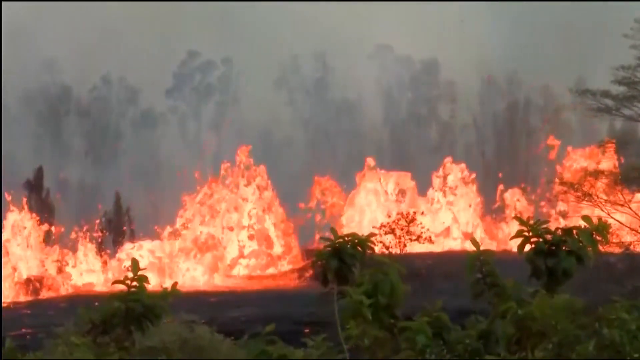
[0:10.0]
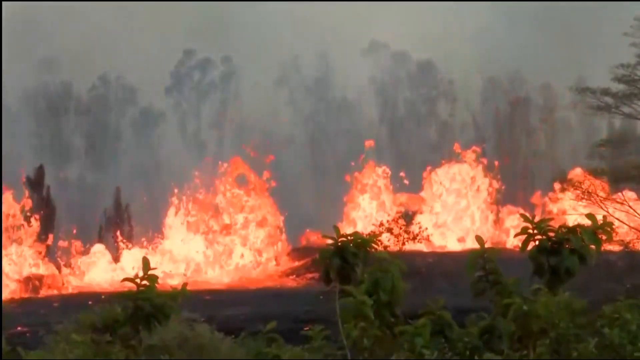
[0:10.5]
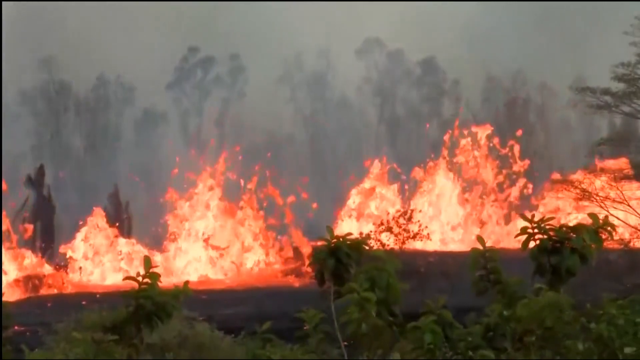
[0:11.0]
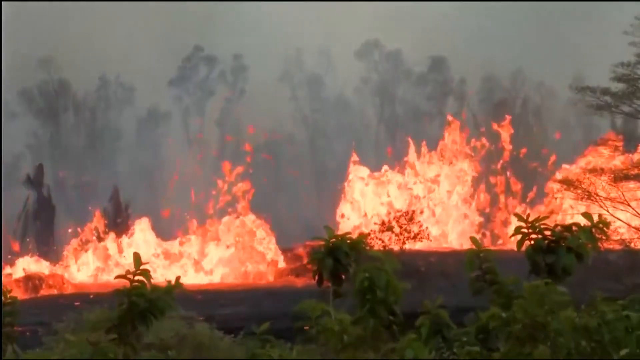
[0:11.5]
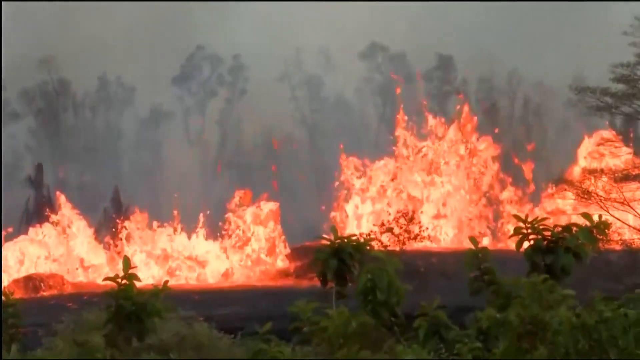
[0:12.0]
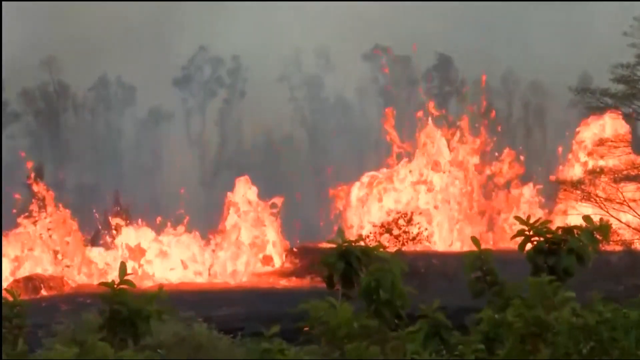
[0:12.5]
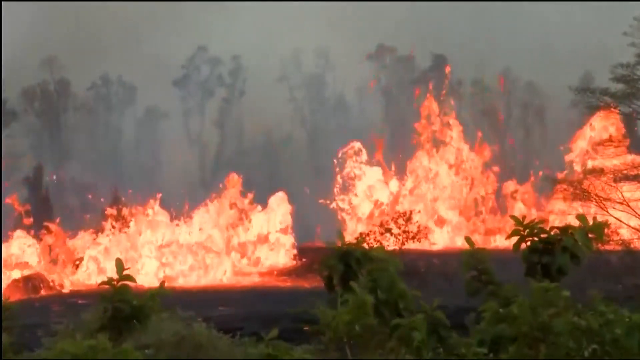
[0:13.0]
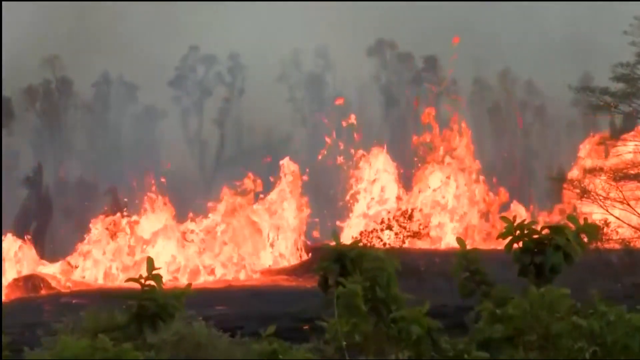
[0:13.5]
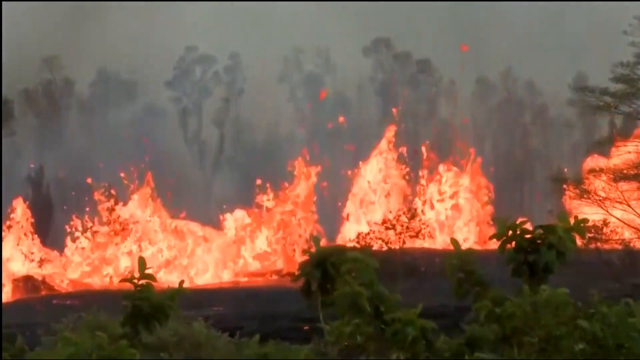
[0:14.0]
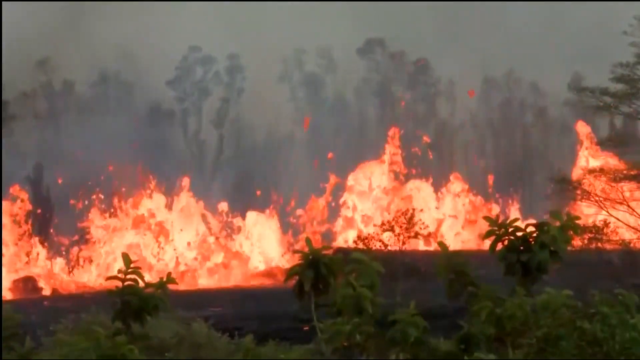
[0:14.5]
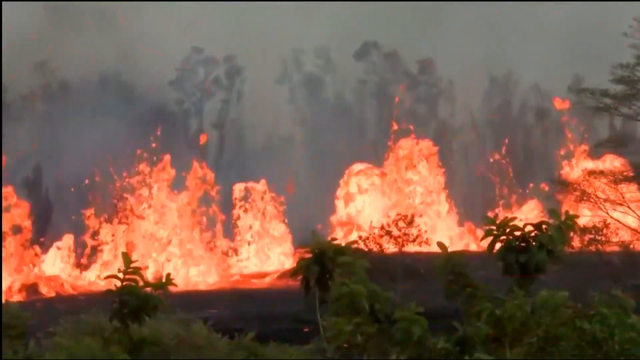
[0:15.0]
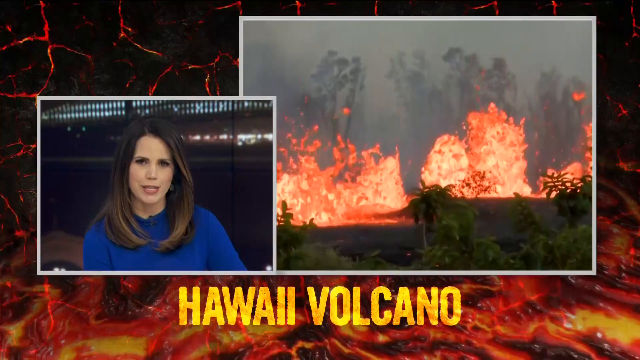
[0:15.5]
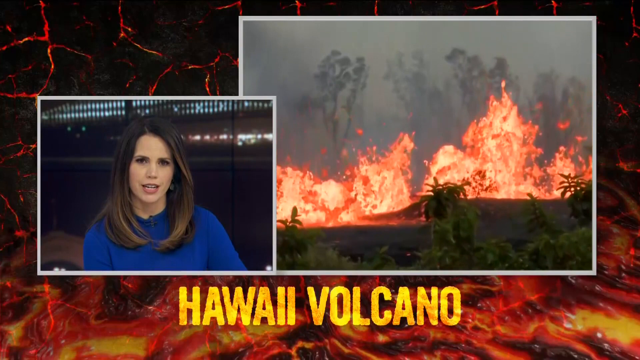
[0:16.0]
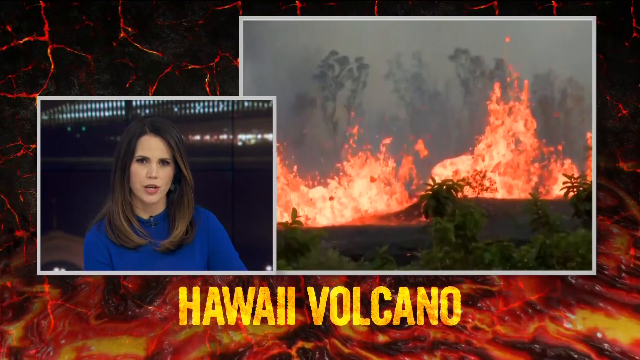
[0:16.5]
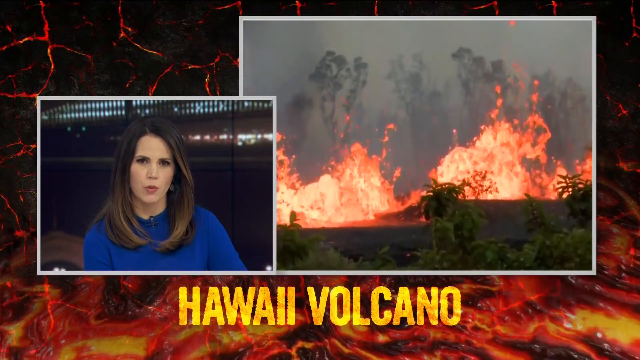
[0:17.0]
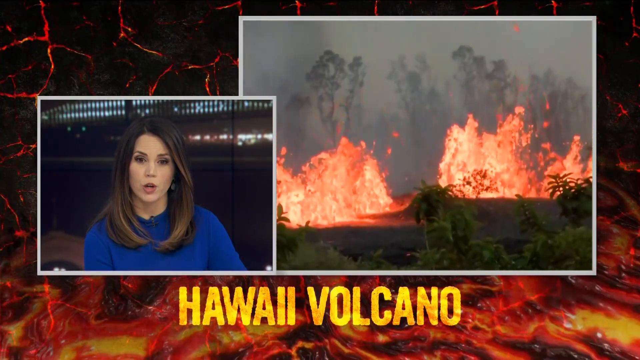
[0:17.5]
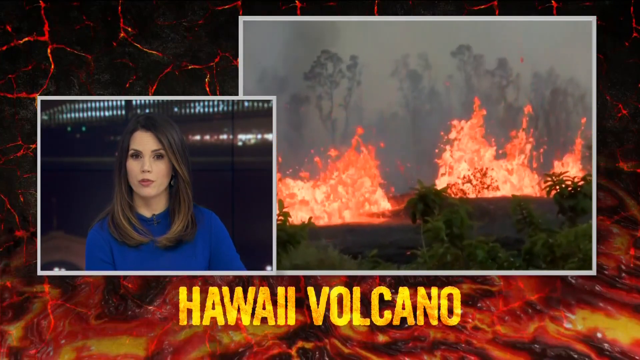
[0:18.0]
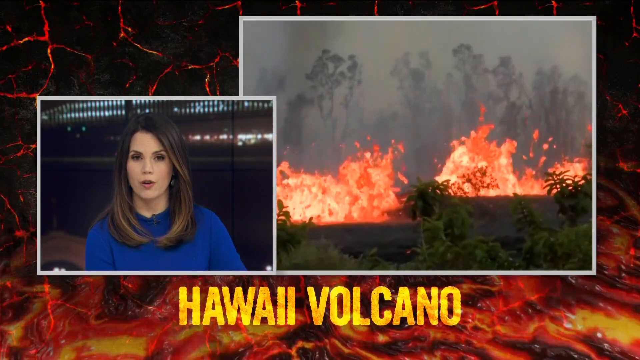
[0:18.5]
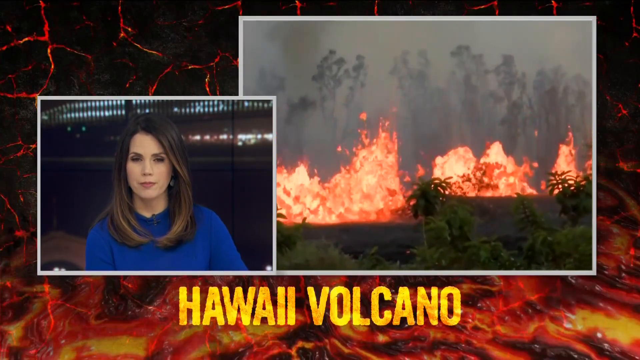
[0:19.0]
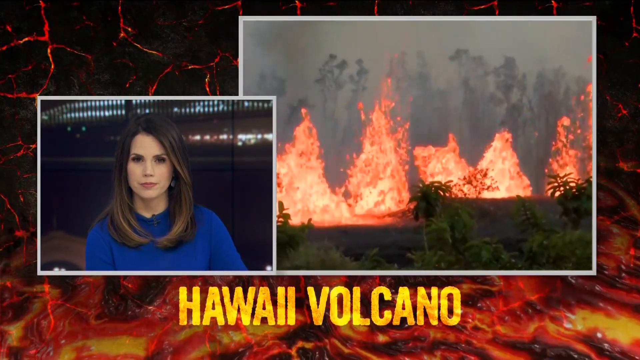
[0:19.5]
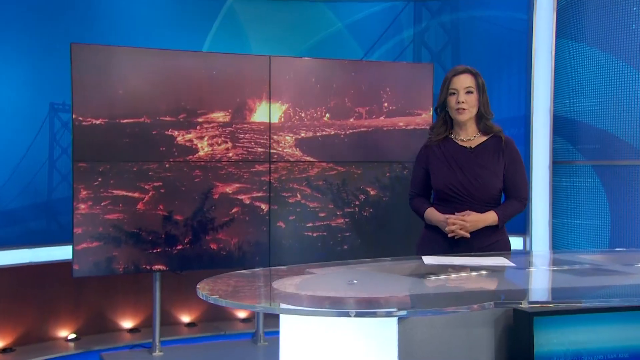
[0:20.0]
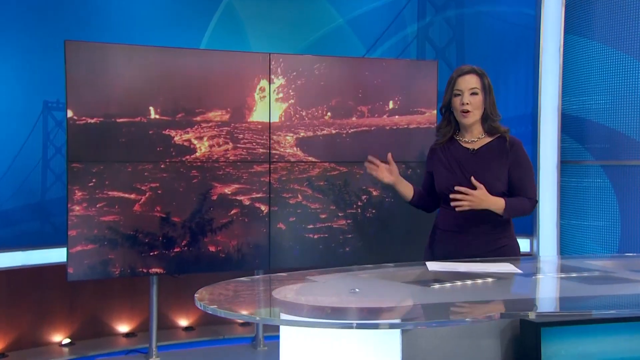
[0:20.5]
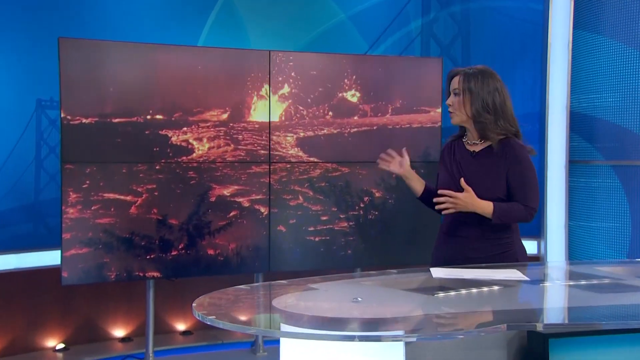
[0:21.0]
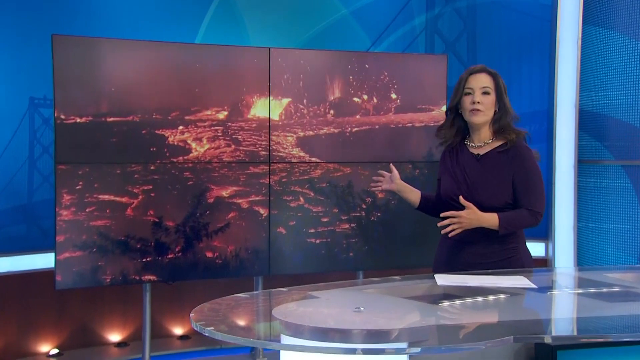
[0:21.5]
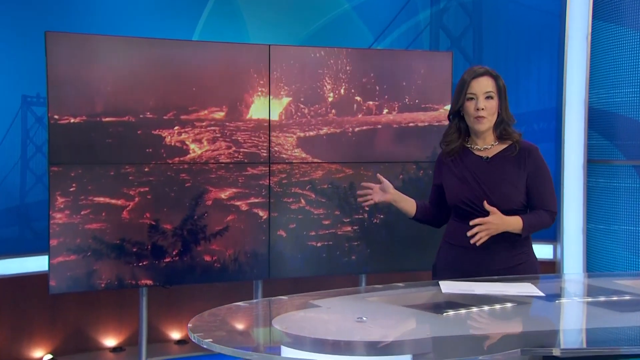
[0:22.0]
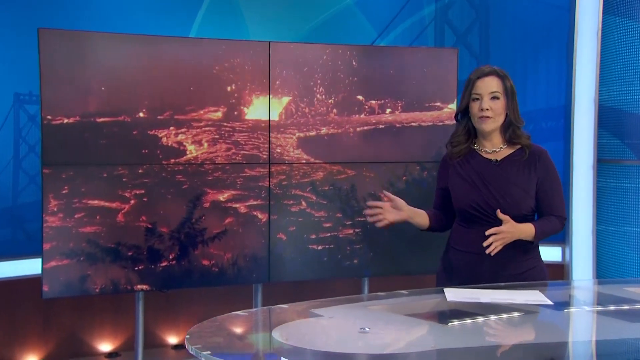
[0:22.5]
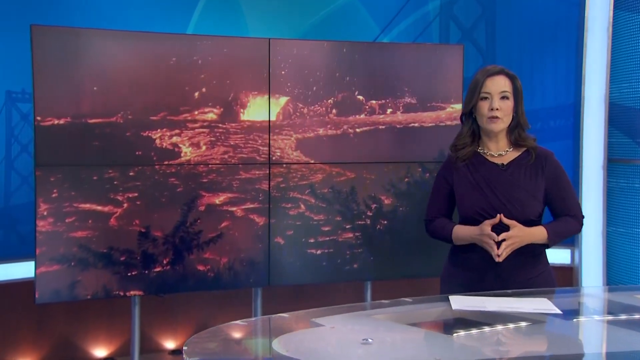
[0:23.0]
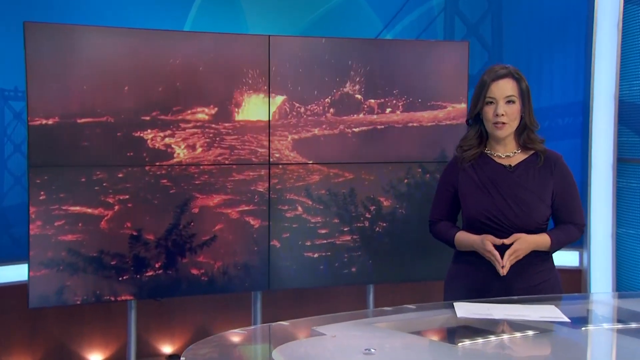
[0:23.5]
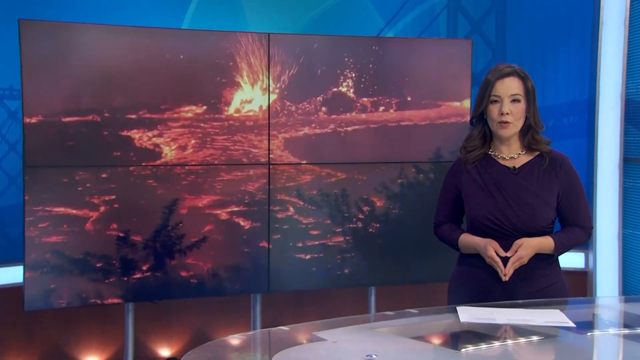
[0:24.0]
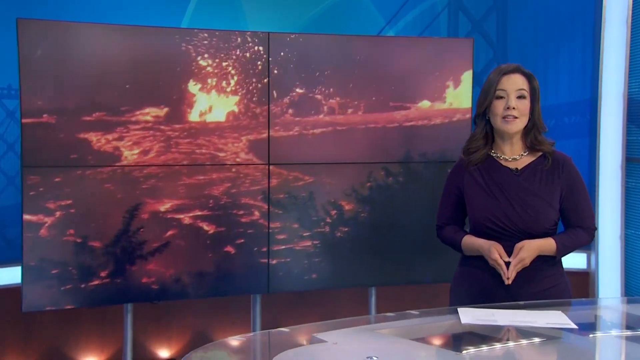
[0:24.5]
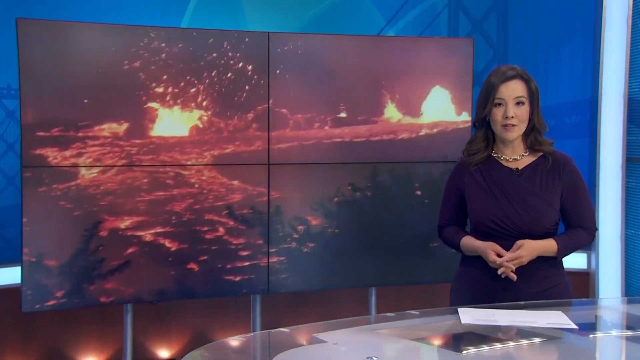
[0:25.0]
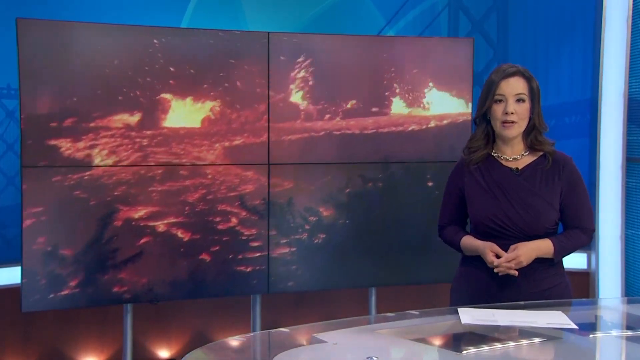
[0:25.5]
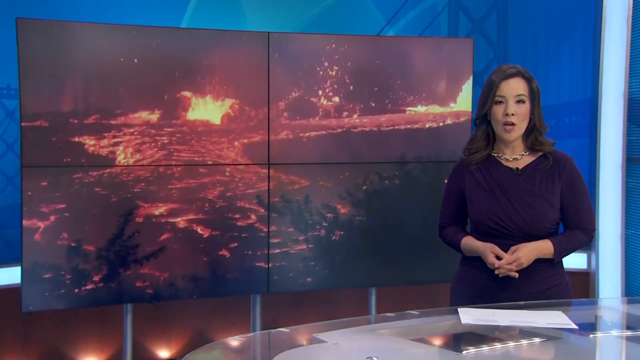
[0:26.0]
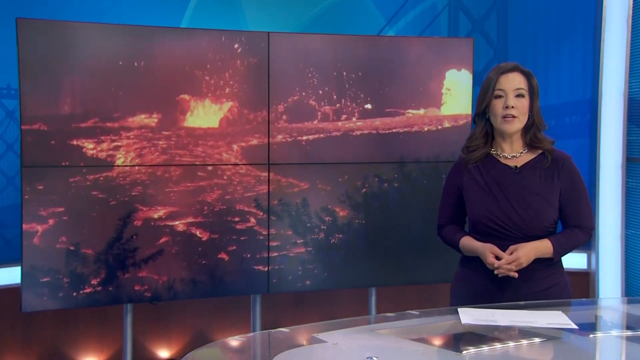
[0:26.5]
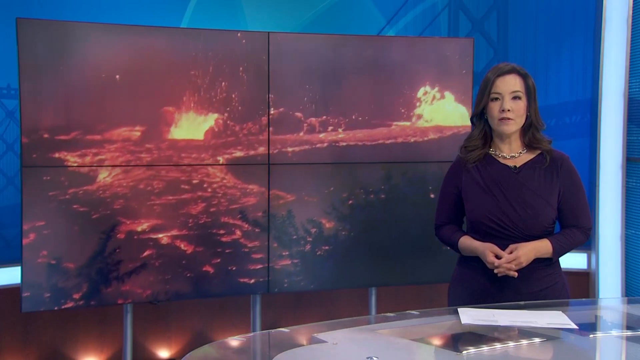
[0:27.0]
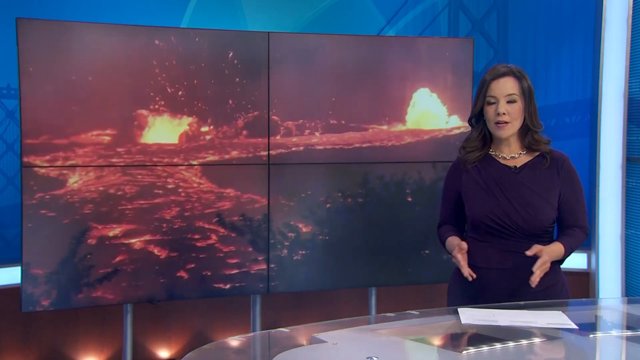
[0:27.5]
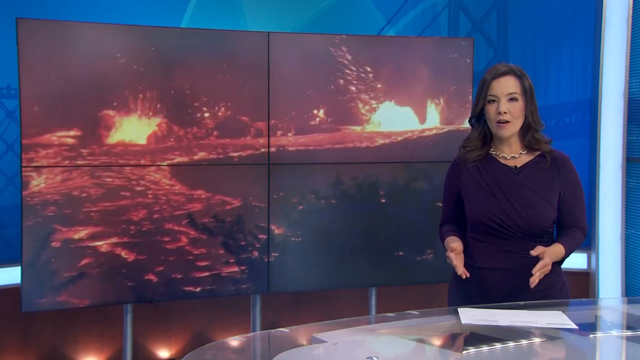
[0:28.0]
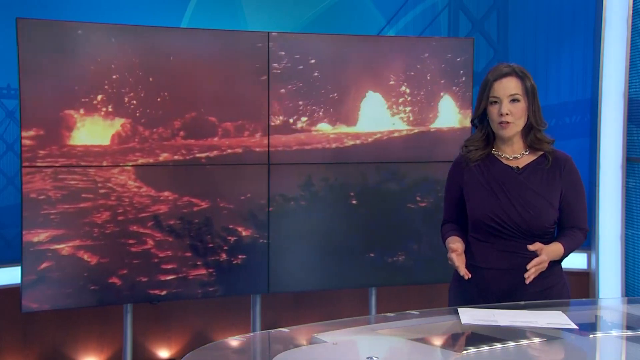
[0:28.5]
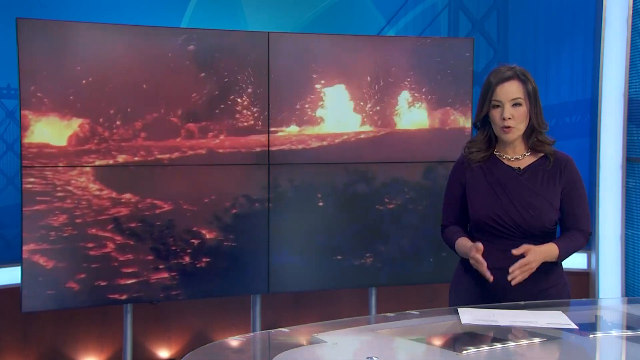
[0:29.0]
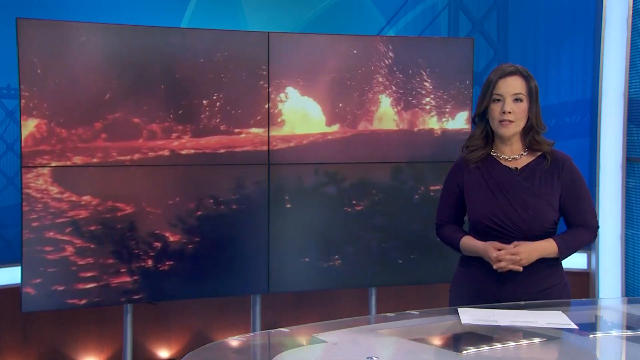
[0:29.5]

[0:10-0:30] In landscape orientation, the scene shows what looks to be a natural occurrence, either a wildfire or a volcanic eruption. Large streams of fiery, lava-looking elements in red and yellowish orange, at least four of them, spew up from the ground, with a lot of smoke behind them. Some trees are barely visible behind them, and there are also some trees in the foreground. The sky appears almost gray because of the smoke. The screen then transitions to what looks like news channel footage: a female reporter in a blue top or dress appears in a rectangle on the left side while the lava video gets smaller, and below that yellow text reads "Hawaii volcano." She is talking. It then transitions to a news station where a different female reporter appears on the right side of the screen in front of a glass table, with a TV or screen of some sort split into four panels behind her showing more footage of a volcanic eruption. This footage looks much more chaotic, with even brighter yellow bursts of lava.